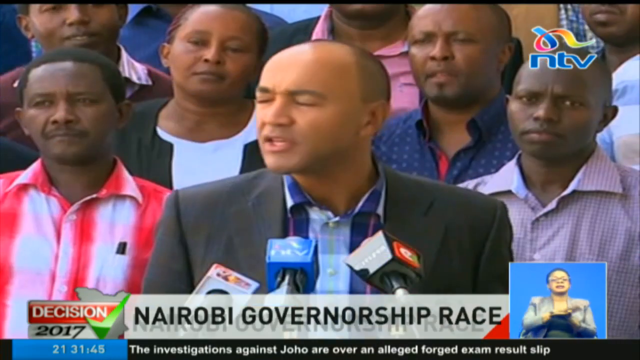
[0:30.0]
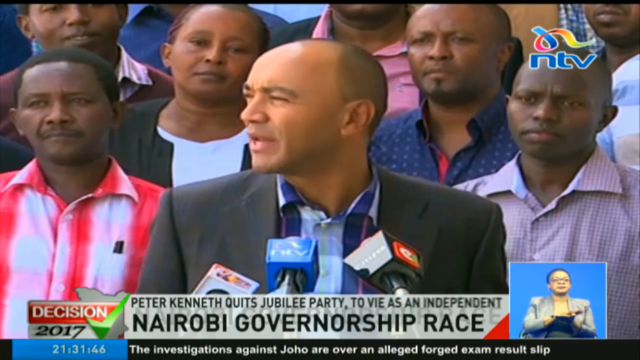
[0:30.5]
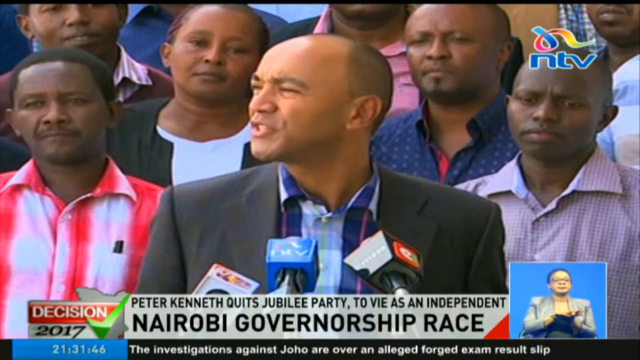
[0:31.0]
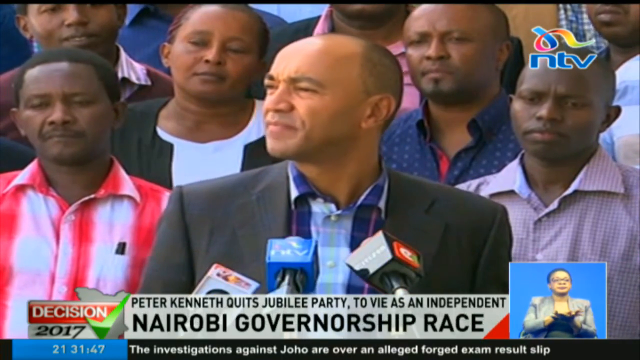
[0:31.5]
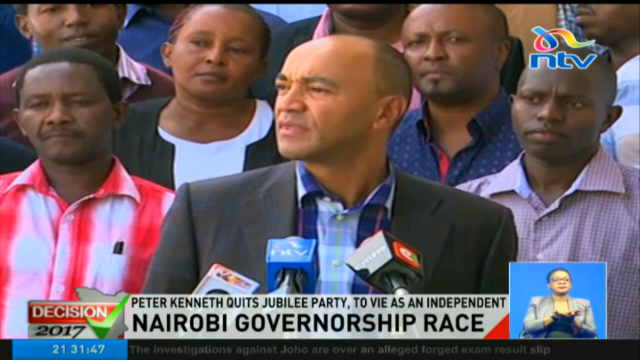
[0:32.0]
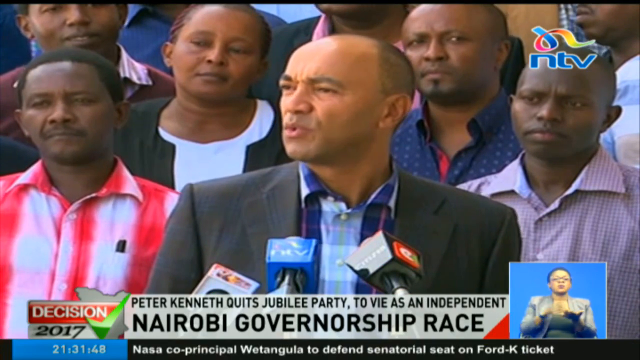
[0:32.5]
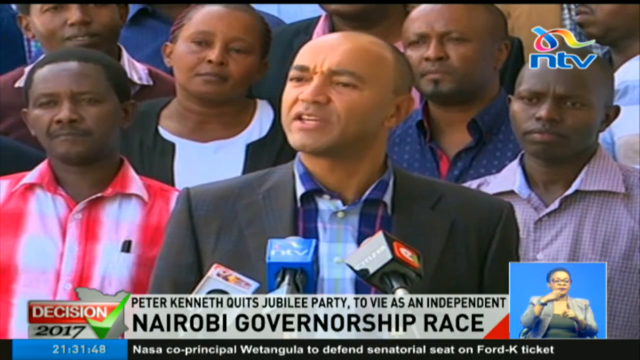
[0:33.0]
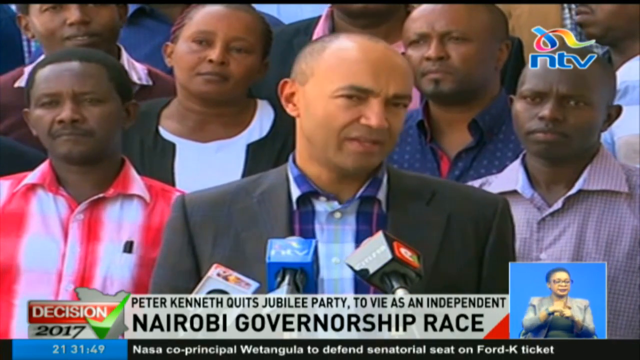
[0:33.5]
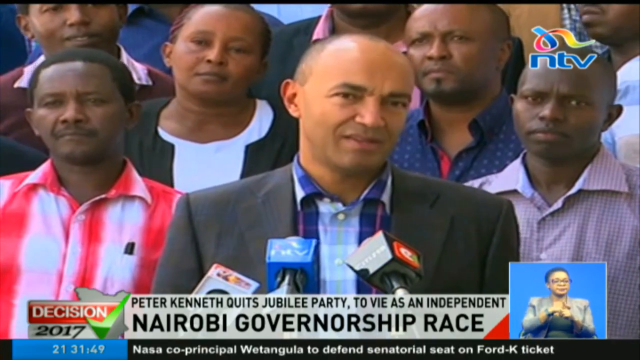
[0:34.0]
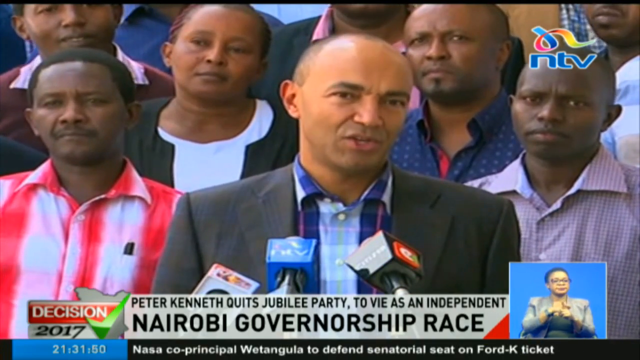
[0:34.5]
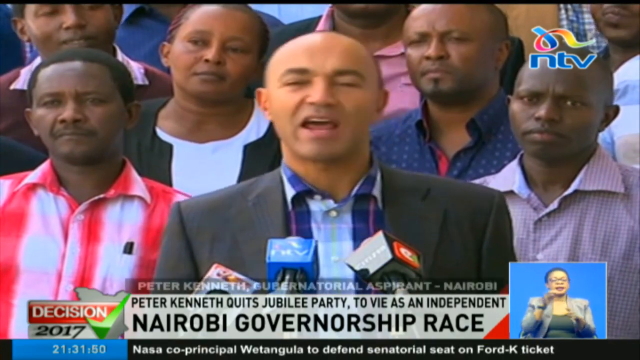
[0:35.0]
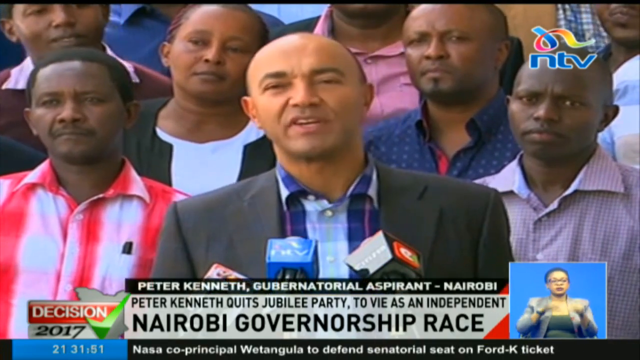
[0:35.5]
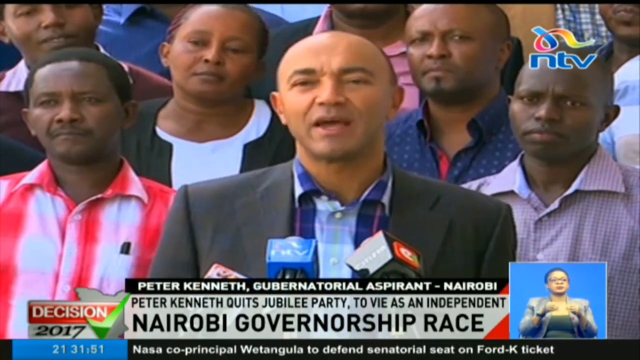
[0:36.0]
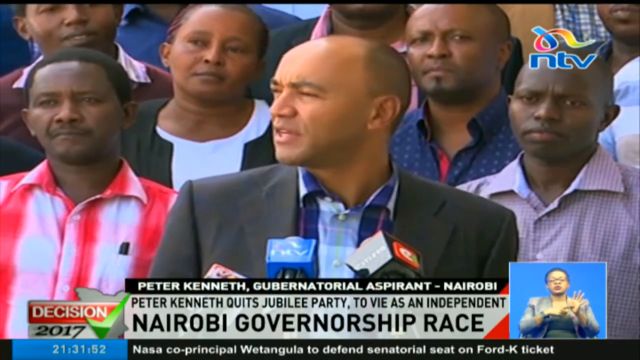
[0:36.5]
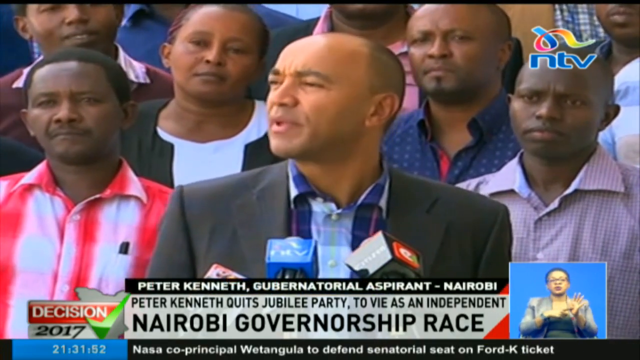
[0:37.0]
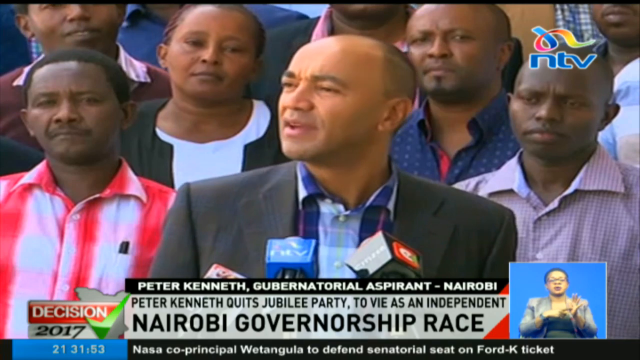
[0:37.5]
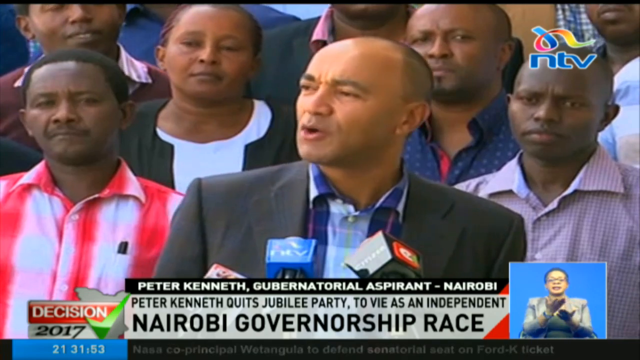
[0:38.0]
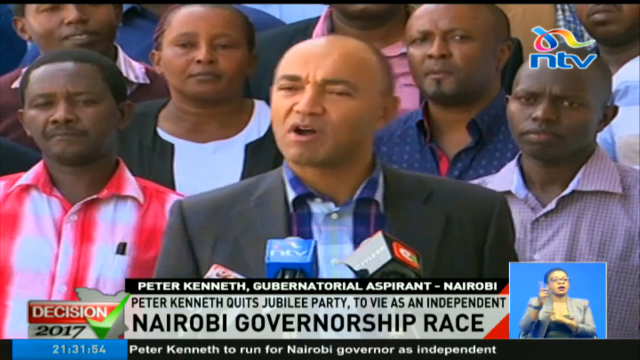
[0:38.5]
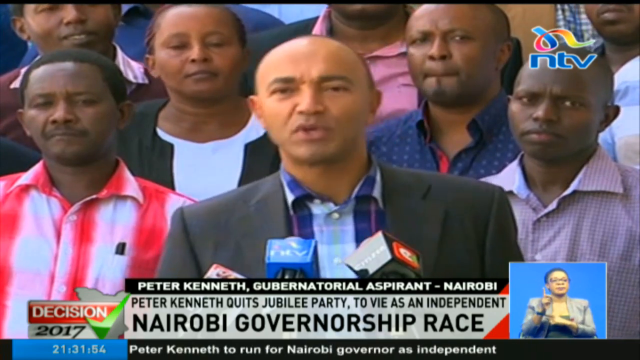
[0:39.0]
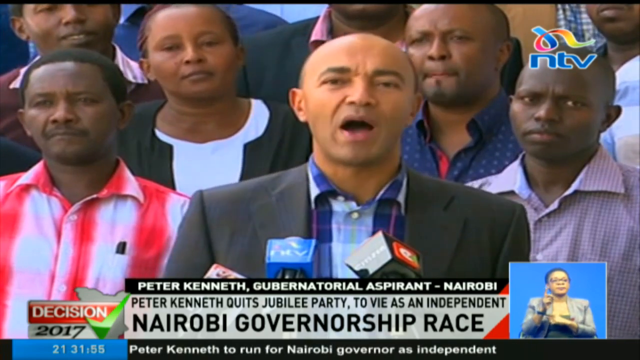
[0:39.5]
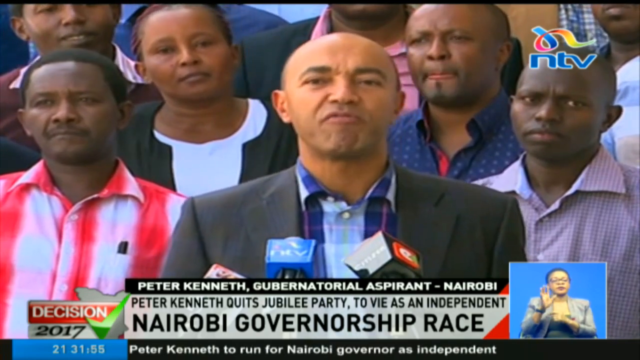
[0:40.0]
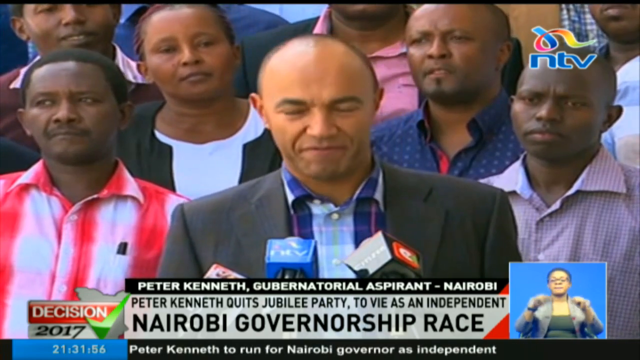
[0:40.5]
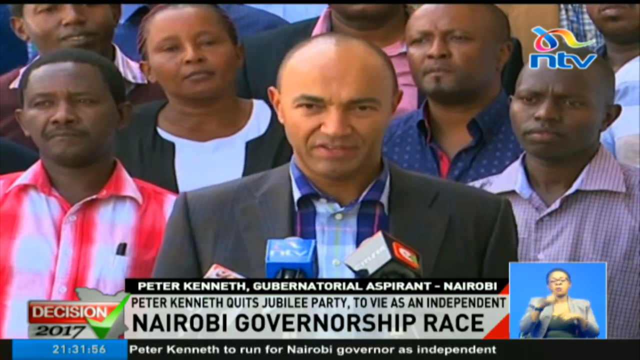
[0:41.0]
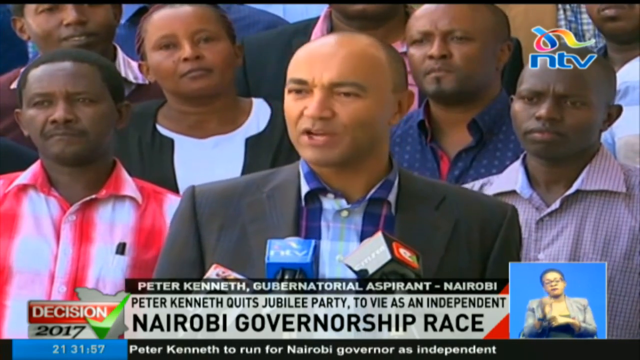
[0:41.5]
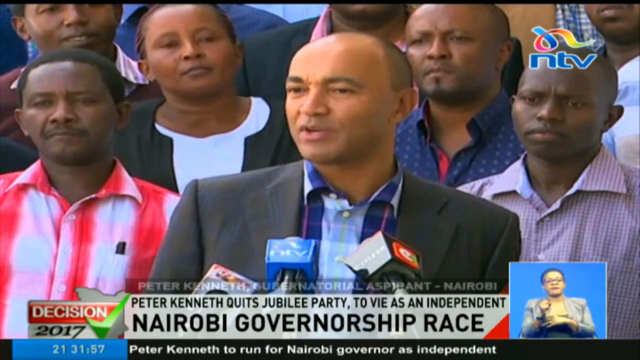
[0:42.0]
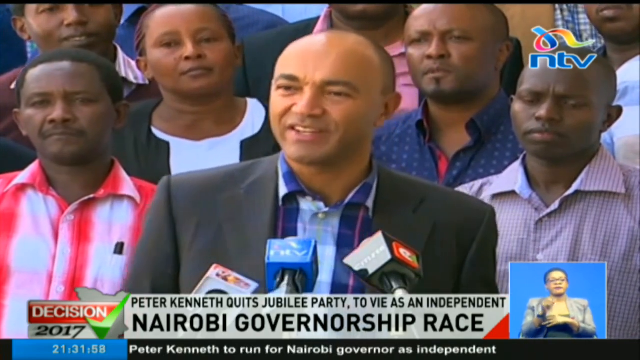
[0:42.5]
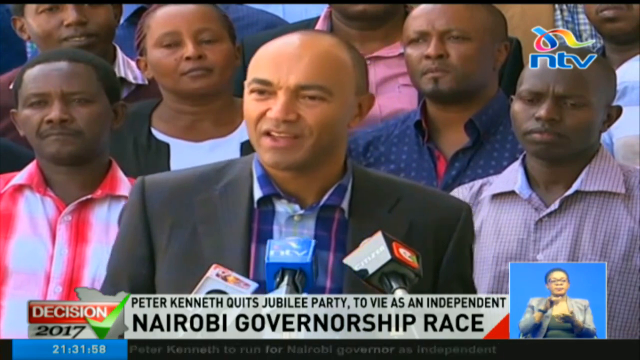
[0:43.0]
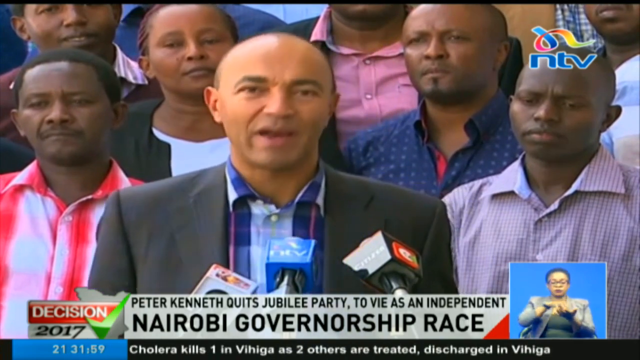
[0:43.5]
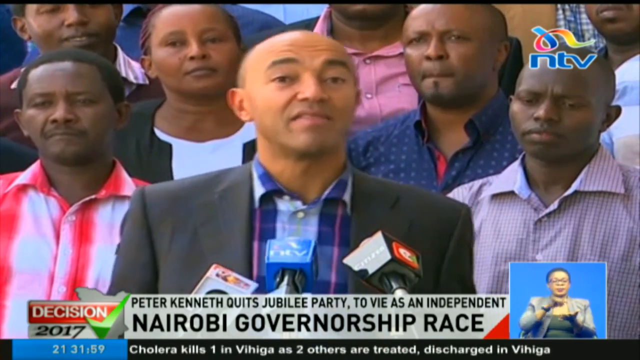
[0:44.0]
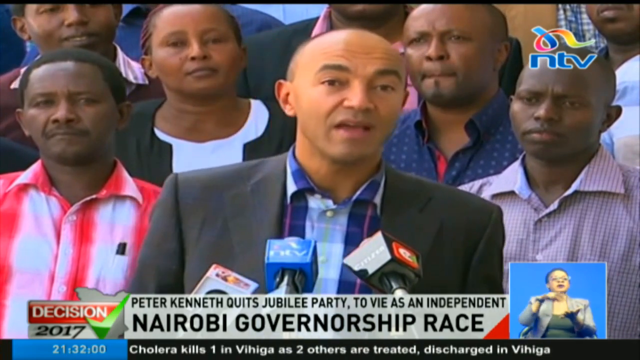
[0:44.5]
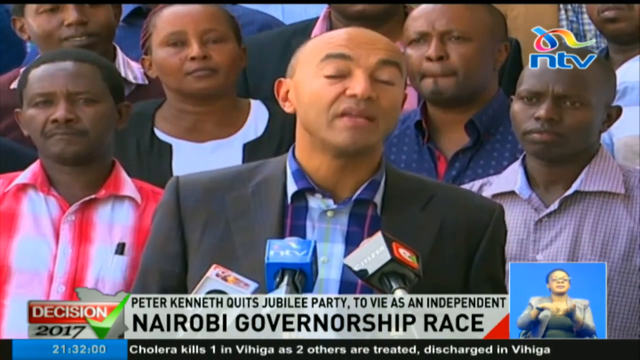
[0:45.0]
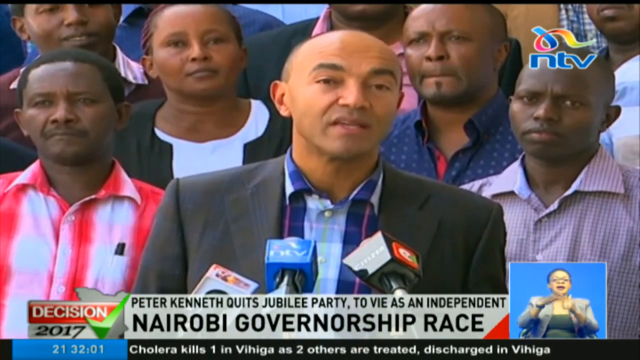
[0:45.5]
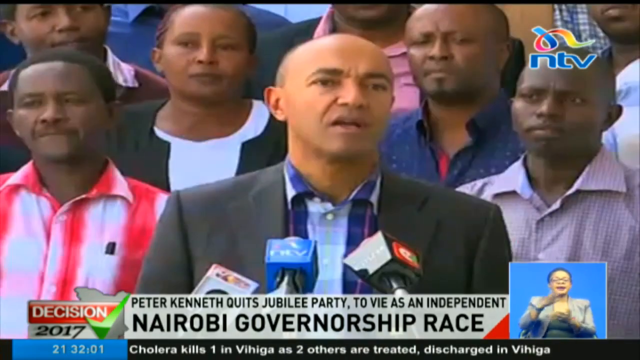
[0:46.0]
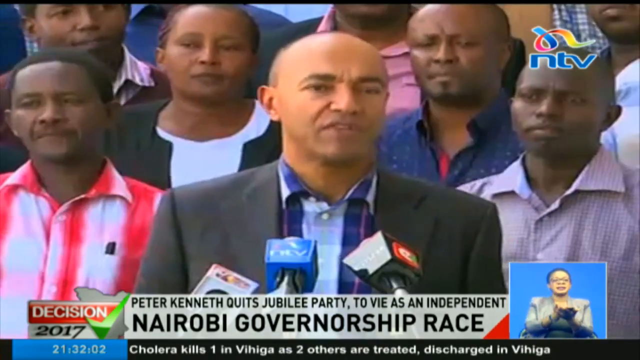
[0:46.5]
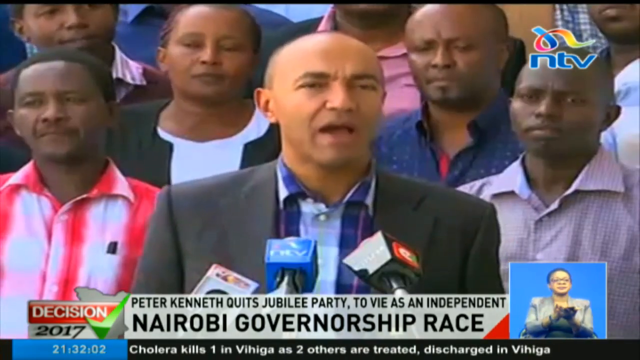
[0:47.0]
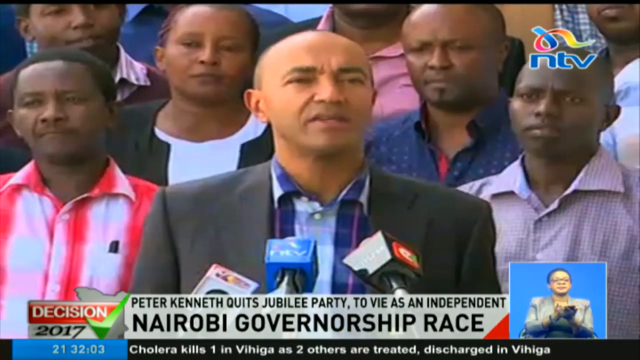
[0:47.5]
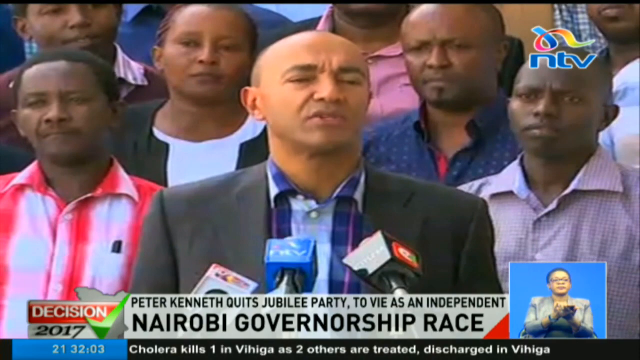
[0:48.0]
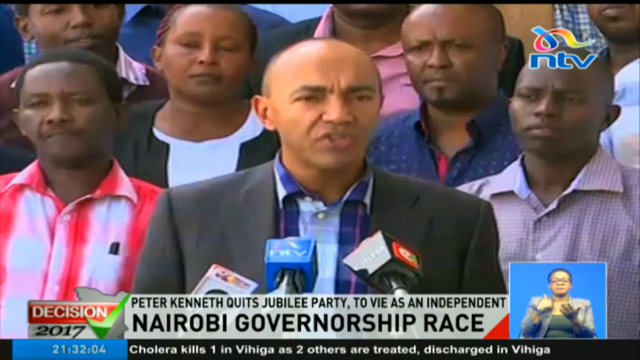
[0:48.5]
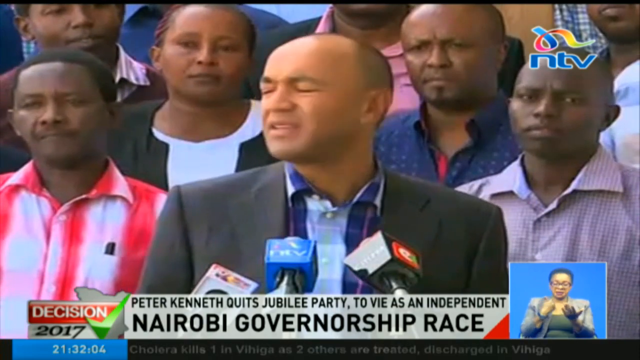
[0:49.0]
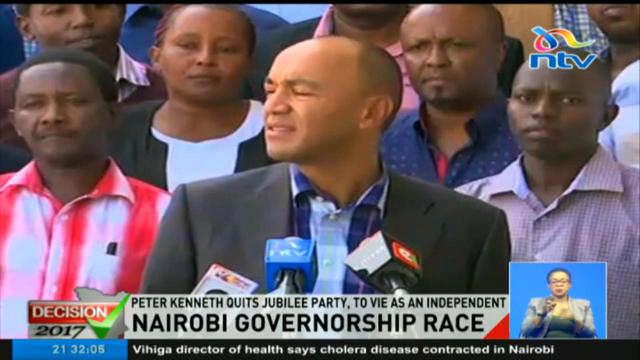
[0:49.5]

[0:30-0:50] A man stands in front of a crowd of people, with a bunch of TV newscast microphones in front of him. The crowd behind him is made up of black people. The man talks while looking toward the left side of the screen, stops talking, then looks back toward the camera and continues. A person at the bottom right of the screen does sign language translation. The man sort of sways his shoulders up and down as he talks, kind of smiles a little, and raises his eyebrows as he continues talking. He talks some more, looking toward the left side of the screen. At the bottom of the screen, a white banner shows black words: "NAIROBI governorship race."